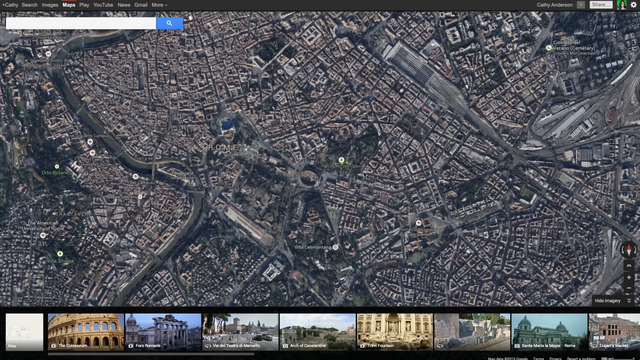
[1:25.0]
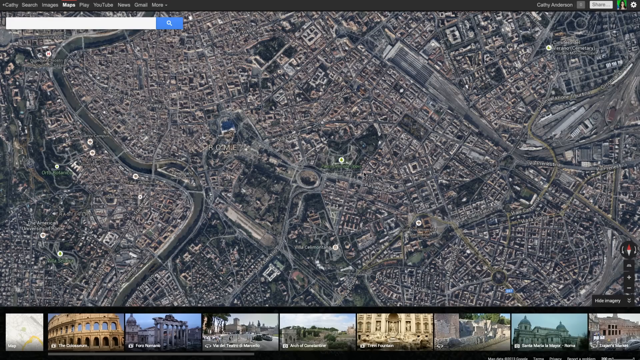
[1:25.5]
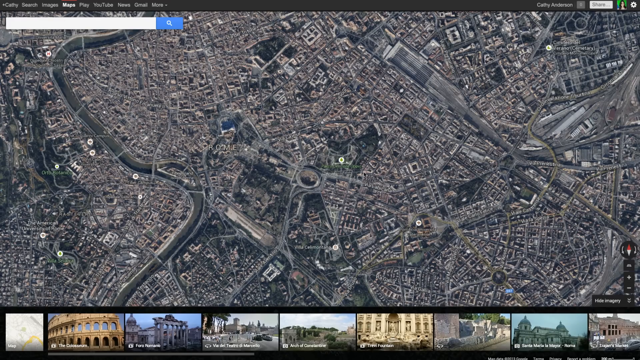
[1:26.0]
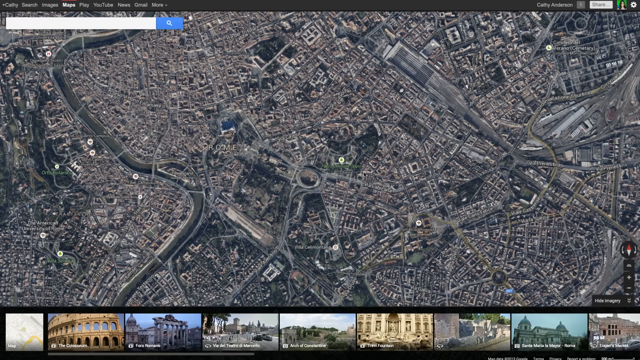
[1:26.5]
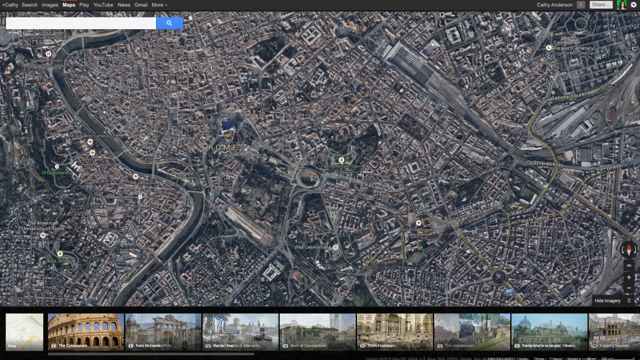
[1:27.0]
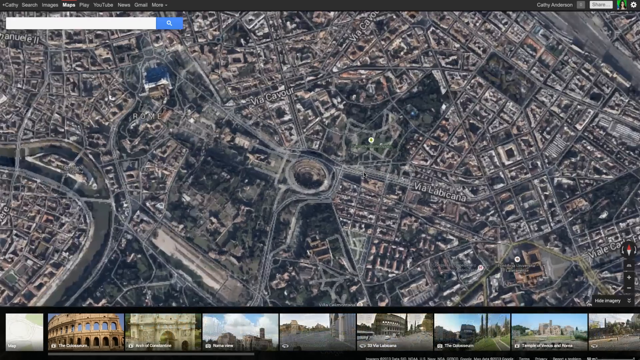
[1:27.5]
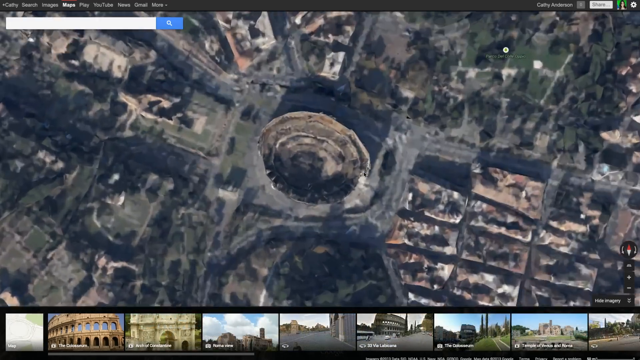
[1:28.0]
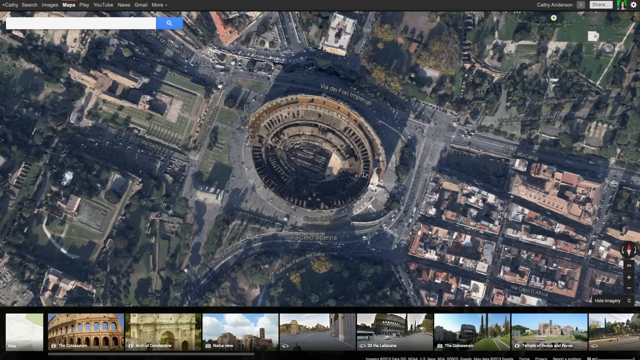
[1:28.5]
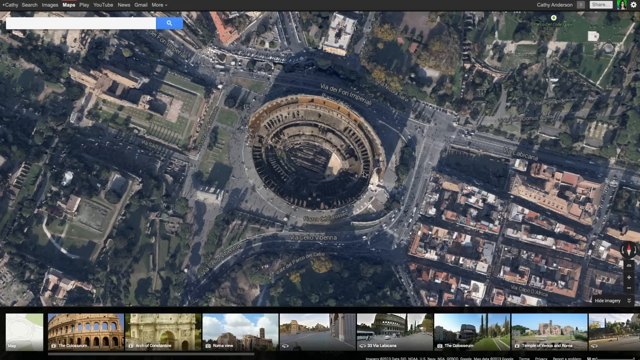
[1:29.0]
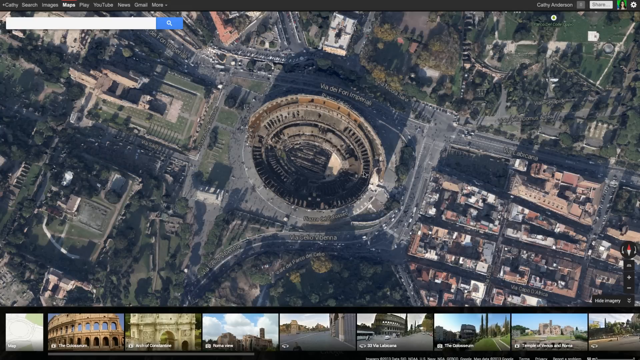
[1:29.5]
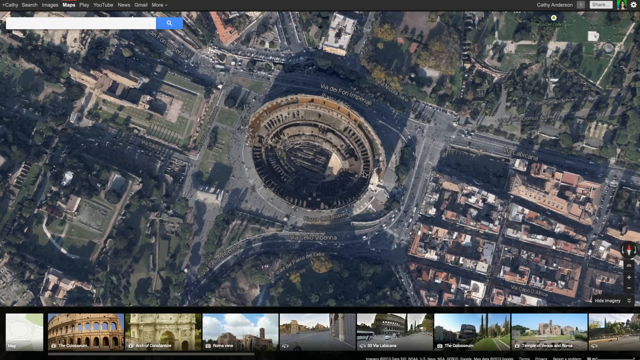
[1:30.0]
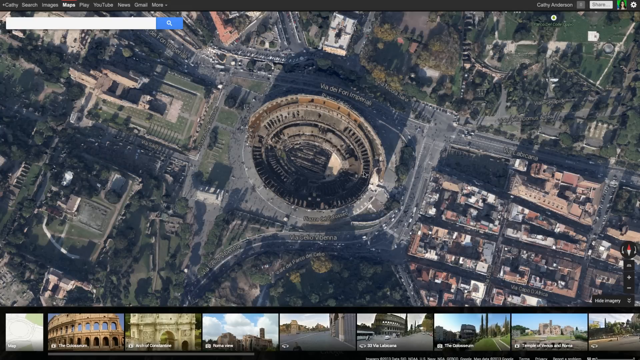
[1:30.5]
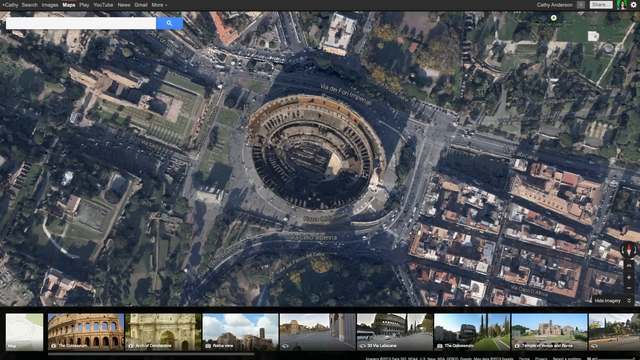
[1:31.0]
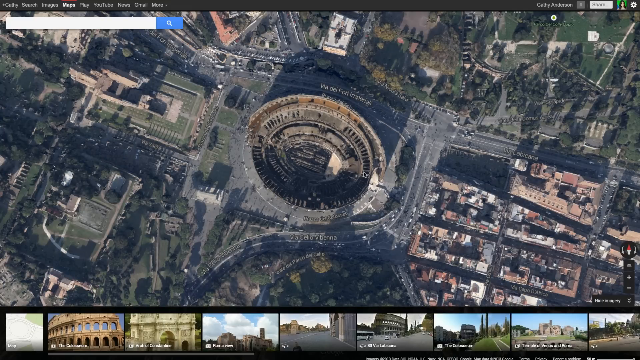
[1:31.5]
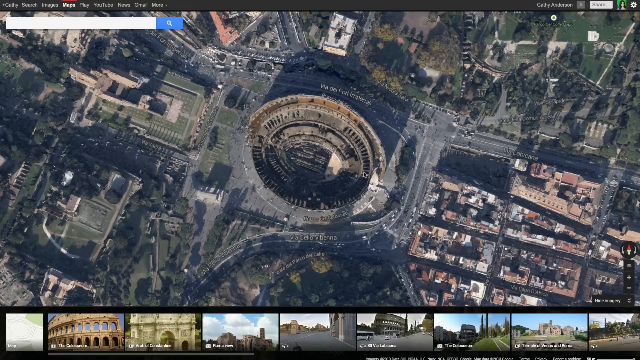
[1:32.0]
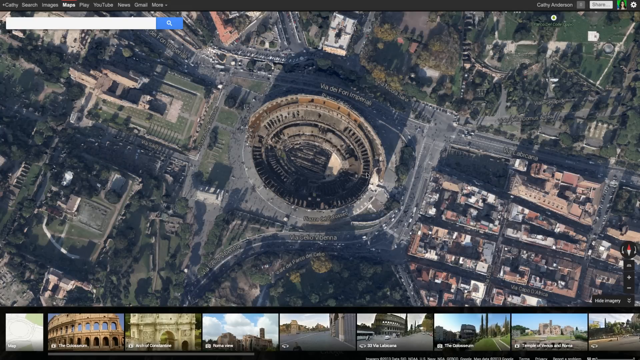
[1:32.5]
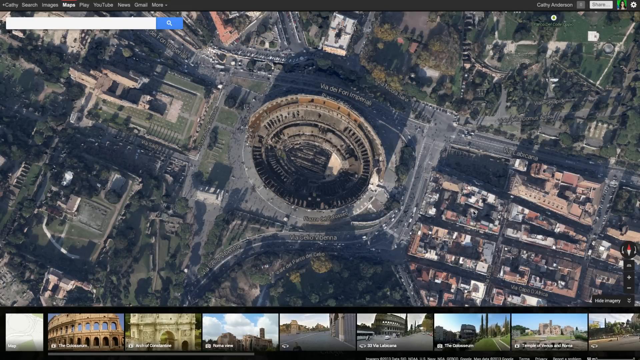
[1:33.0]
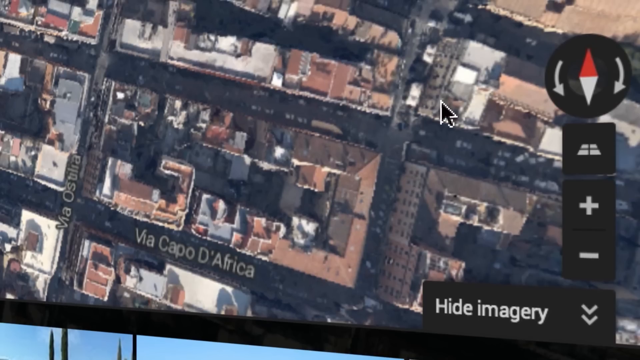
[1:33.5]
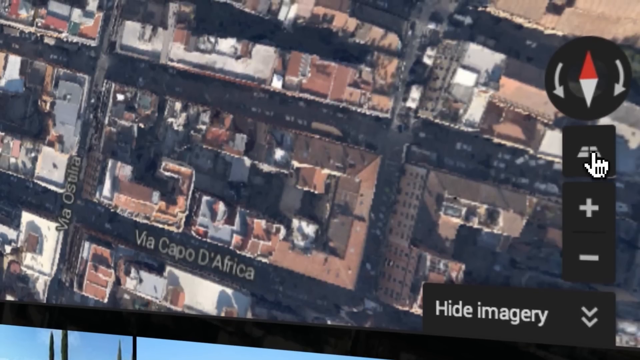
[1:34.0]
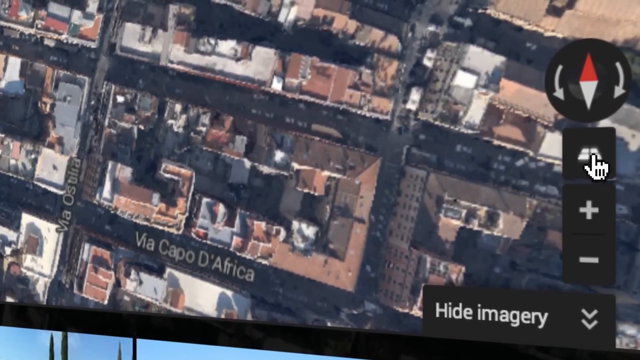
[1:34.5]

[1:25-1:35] In the earth view, the map is realistic, showing the colors of the world, greens for the grass, and streets, seen from the top. The person zooms in to the Coliseum. Before zooming all the way in, they click on a UI area at the bottom right, on what looks to be a button with almost like two chairs, though it is very hard to see. This UI area is black or grayish with buttons bearing white logos. At the bottom of the map view there is a gallery of images, and a search bar is in the top left-hand corner.